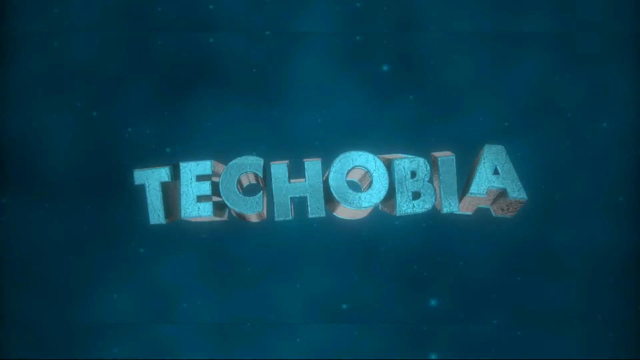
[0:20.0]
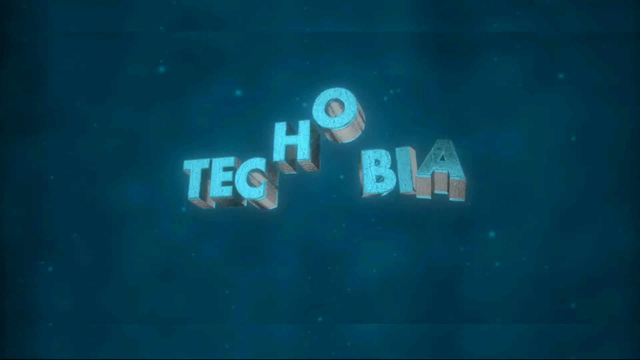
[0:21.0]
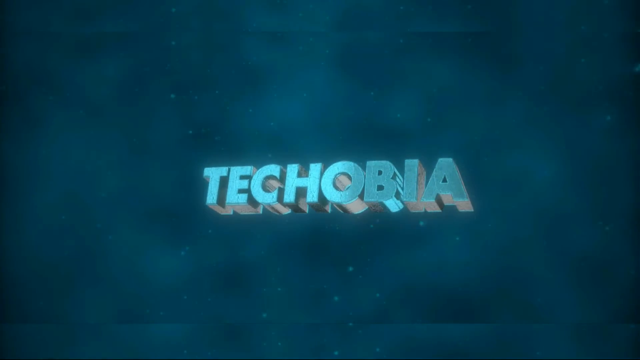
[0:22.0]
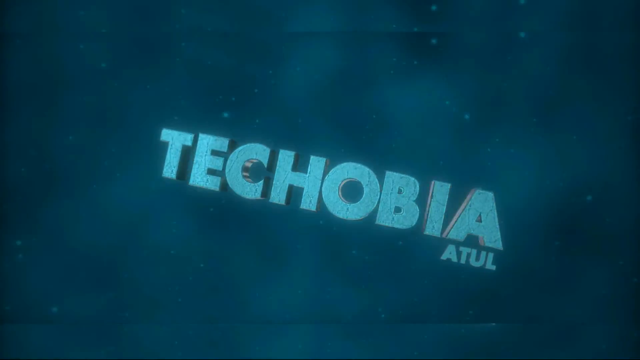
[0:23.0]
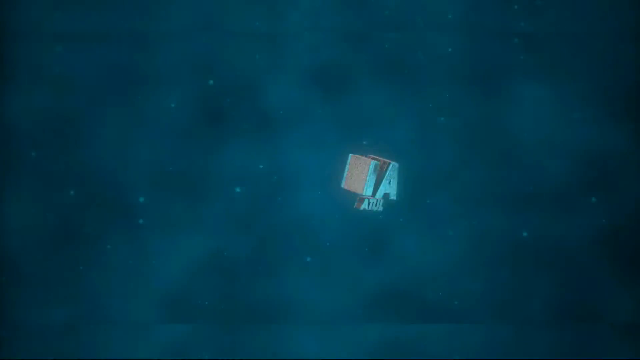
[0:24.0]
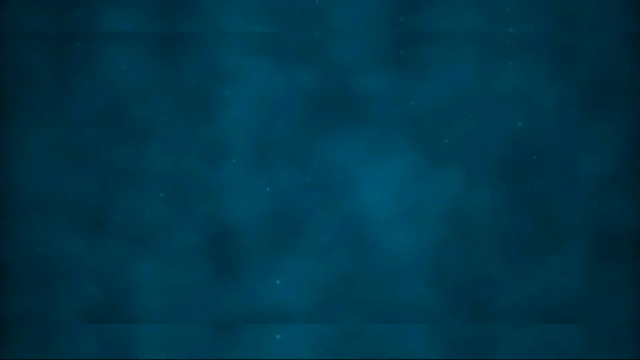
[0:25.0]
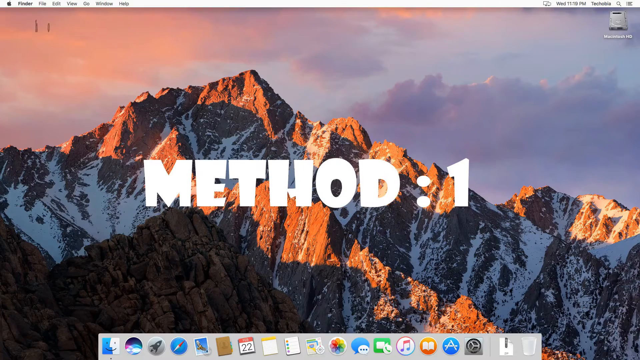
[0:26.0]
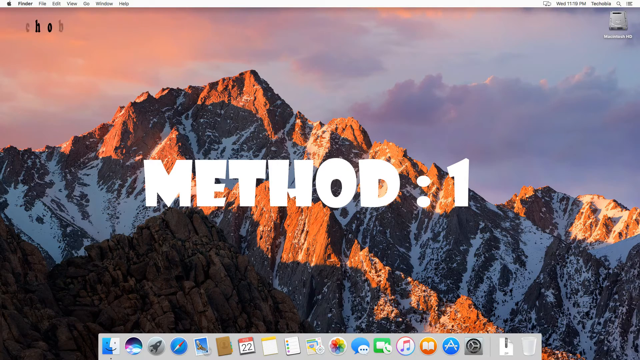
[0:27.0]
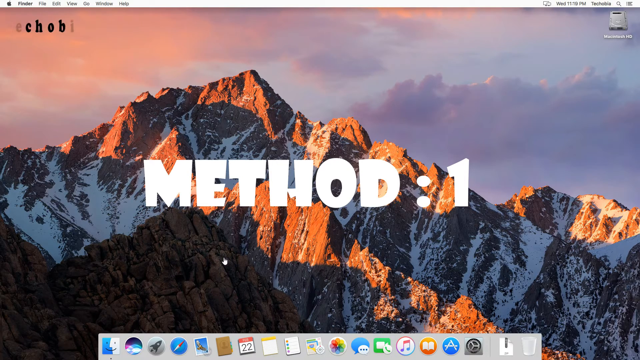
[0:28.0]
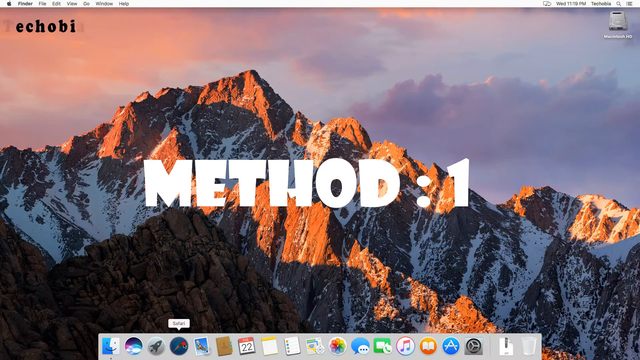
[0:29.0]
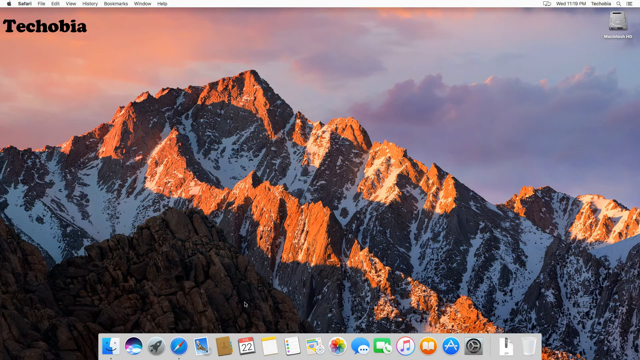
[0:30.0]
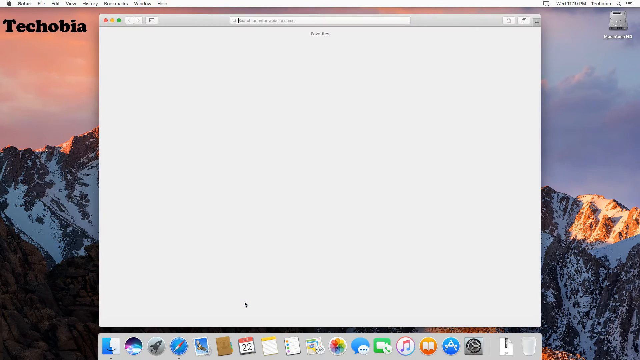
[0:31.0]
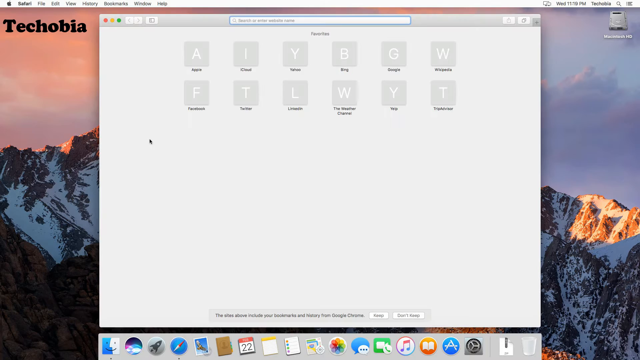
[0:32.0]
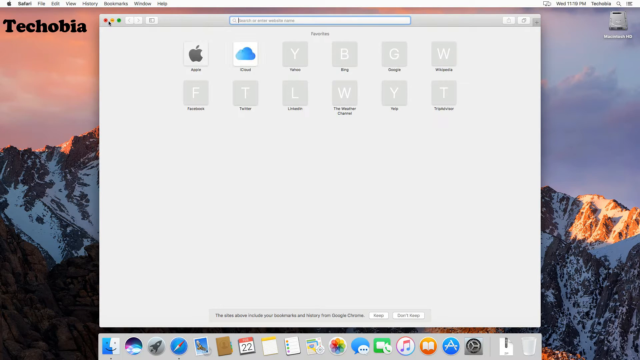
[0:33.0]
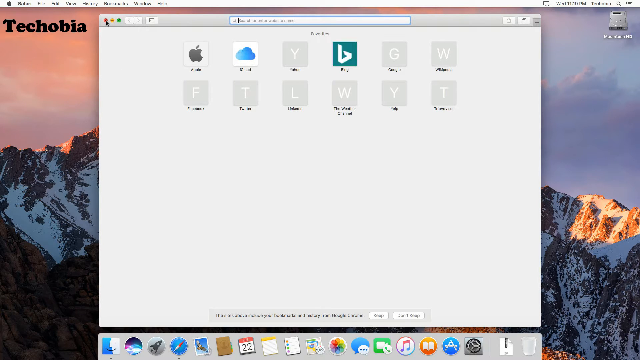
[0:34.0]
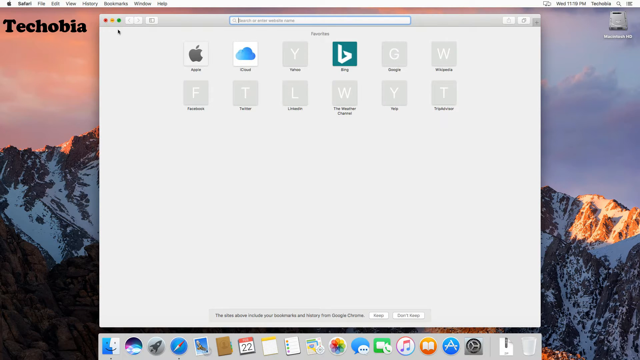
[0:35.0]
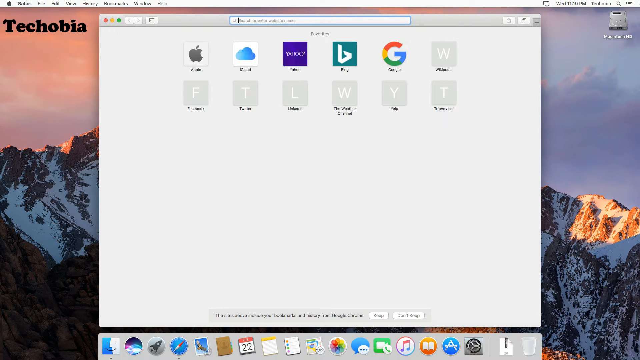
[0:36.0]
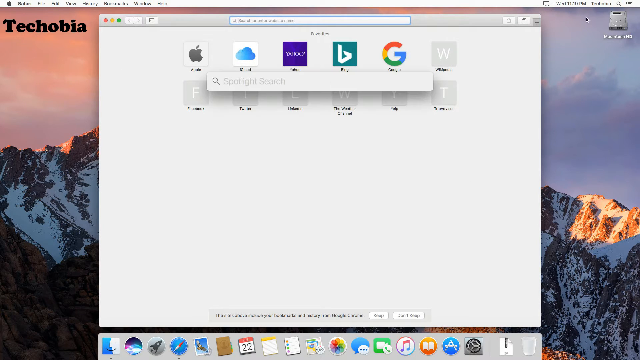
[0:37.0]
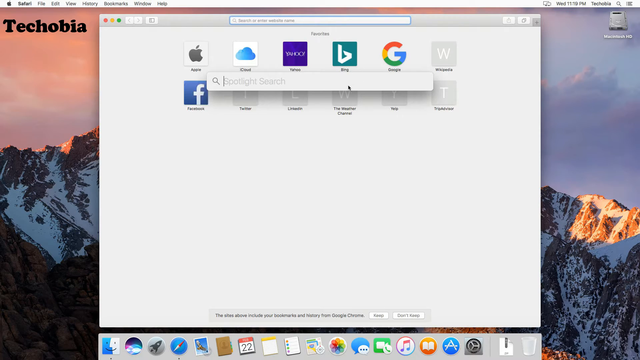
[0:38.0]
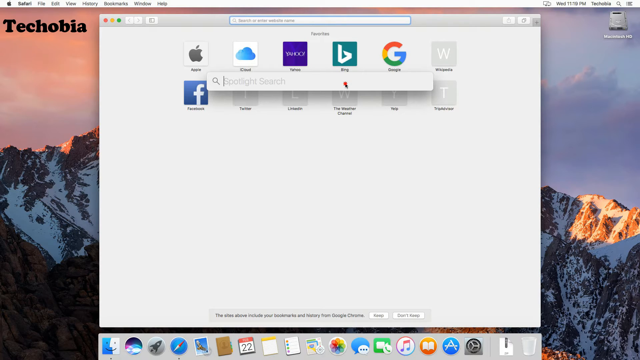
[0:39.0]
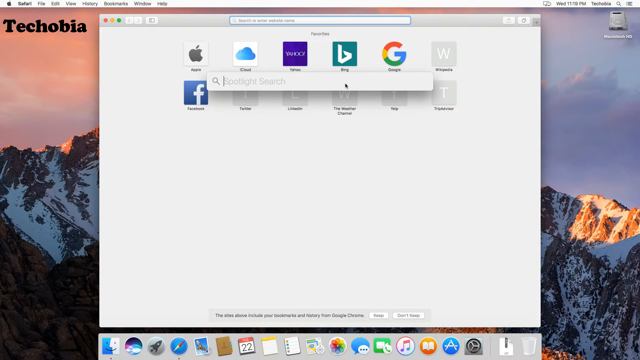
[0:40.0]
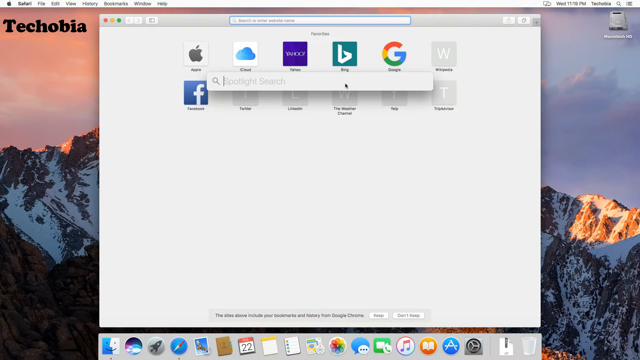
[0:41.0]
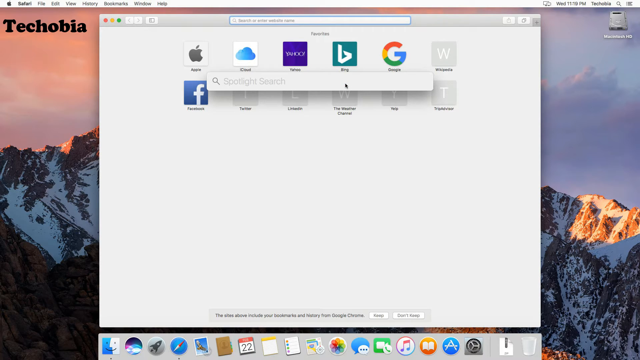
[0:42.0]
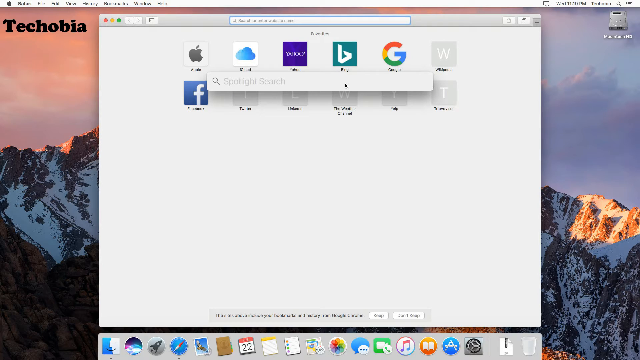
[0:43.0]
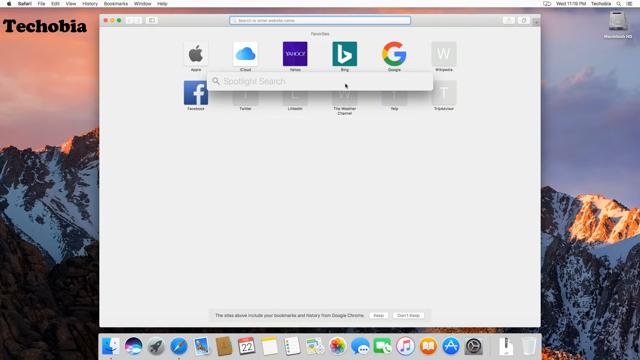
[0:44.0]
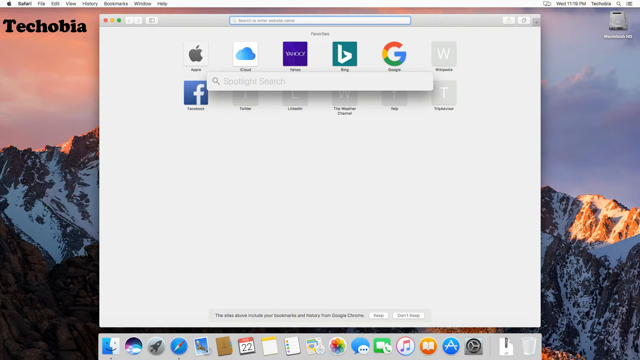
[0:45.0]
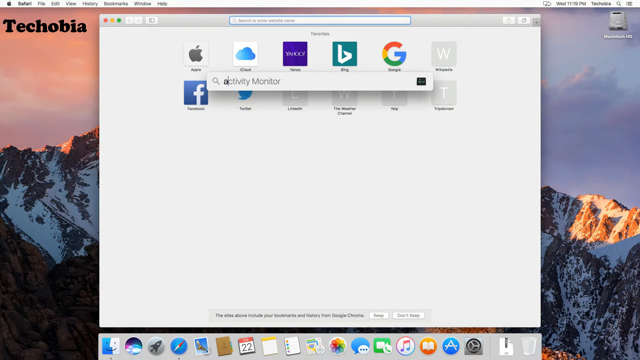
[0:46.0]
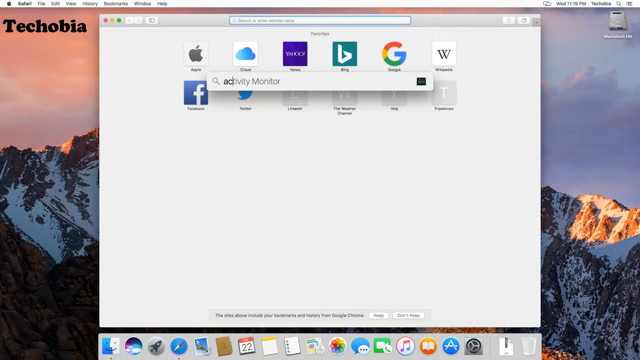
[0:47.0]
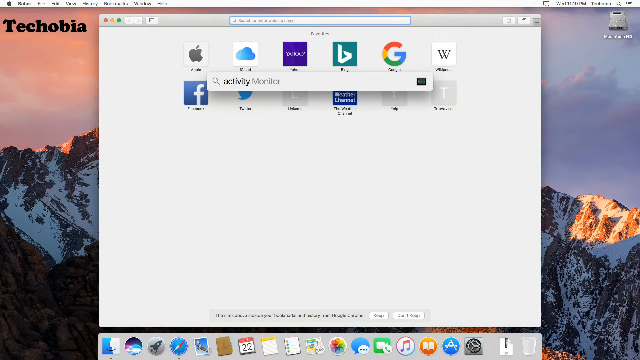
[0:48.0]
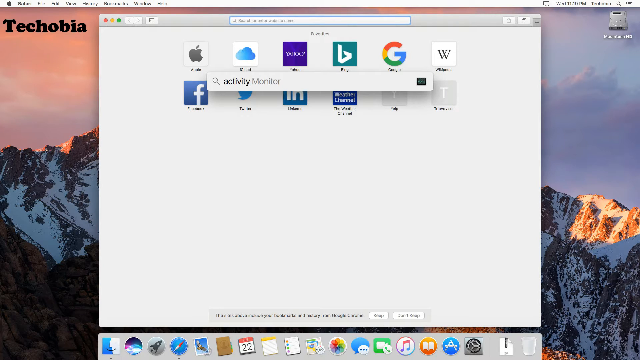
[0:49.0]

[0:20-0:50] Against a blue background, the word "Techobia" in a slightly lighter blue dances around. The word "ATUL" appears in 3D underneath the A in "Techobia," and then all of the letters disappear rapidly one by one. The screen with the snow-covered, shadowed mountain and the sun in the background returns, and the words "method: 1" appear. A mouse moves around the screen, goes to the bottom and clicks on something that looks like the start menu. A bubble with a word appears, but it is too small to read. A menu comes up with icons for app, iCloud, Yahoo, Bing, Google, Yelp, Facebook, the Weather Channel, and others that cannot be made out. The mouse clicks a red button on the menu, which brings up iCloud, Yahoo, Bing, and Google with a spotlight search bar below those icons. The mouse highlights the search bar and he types in "activity monitor"; the words are already there before he finishes typing, apparently because it has been searched for before.